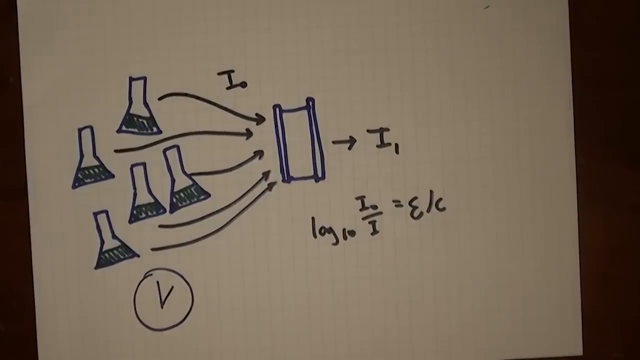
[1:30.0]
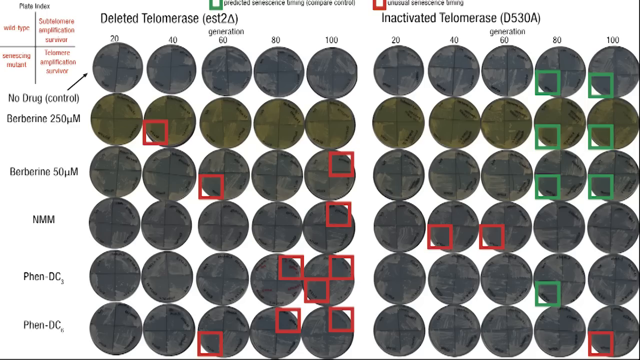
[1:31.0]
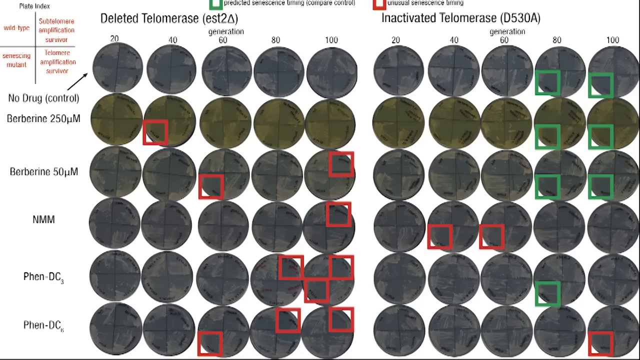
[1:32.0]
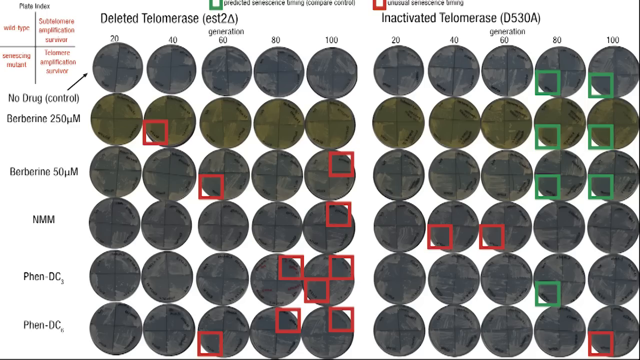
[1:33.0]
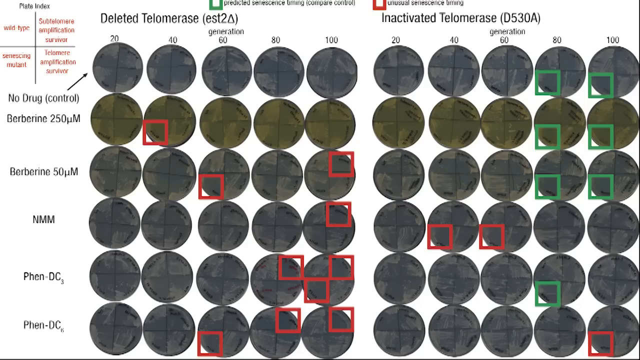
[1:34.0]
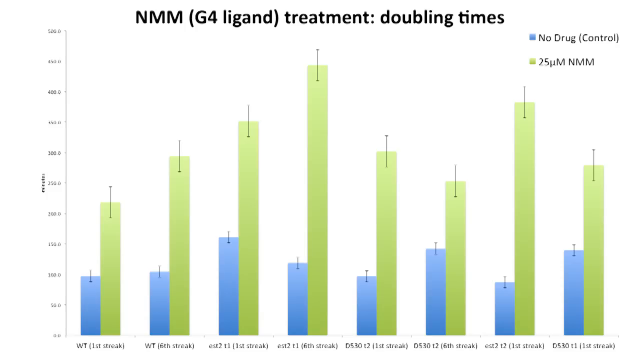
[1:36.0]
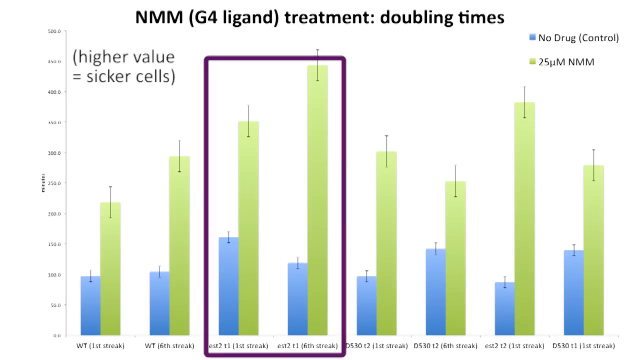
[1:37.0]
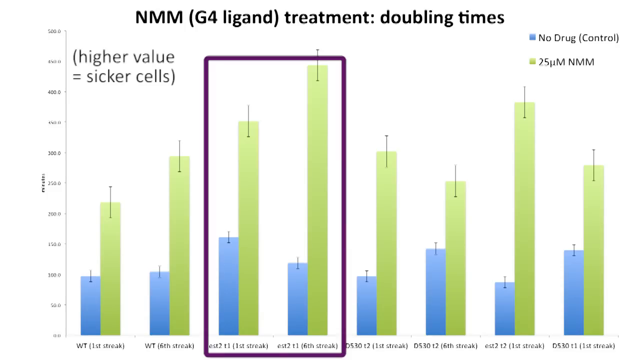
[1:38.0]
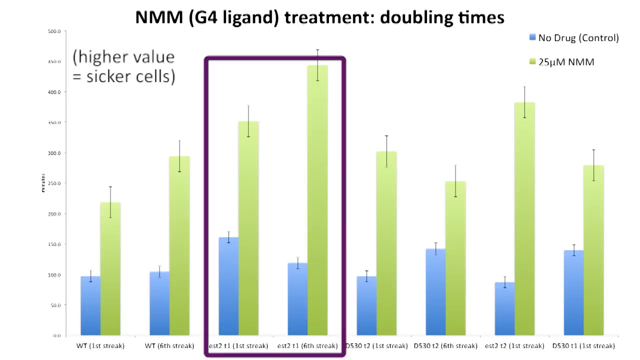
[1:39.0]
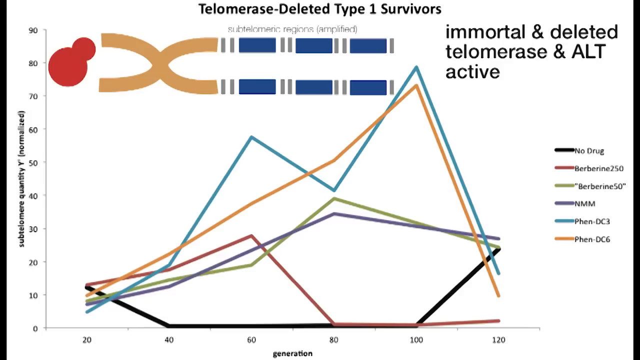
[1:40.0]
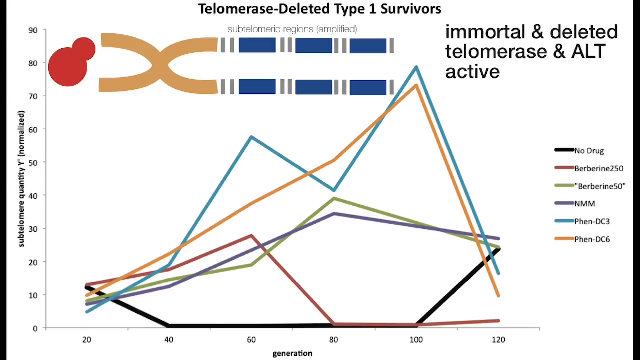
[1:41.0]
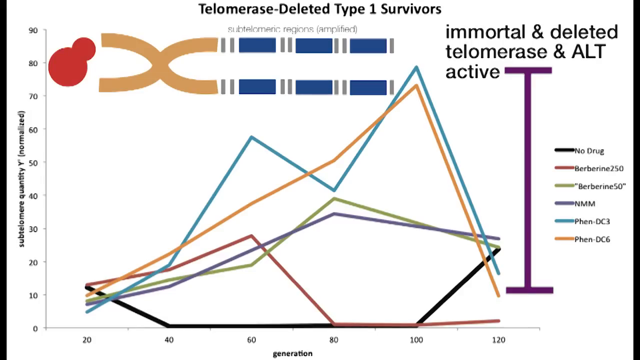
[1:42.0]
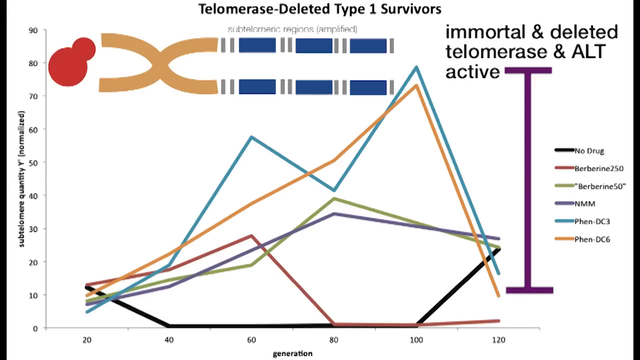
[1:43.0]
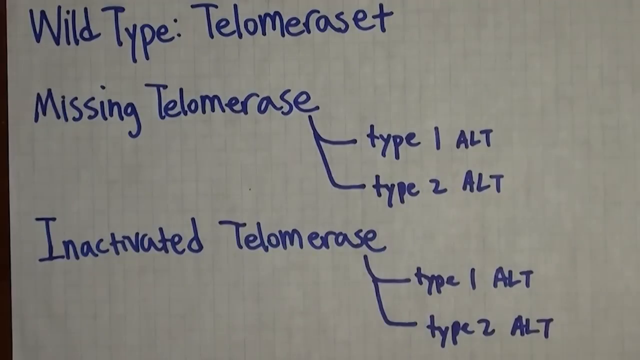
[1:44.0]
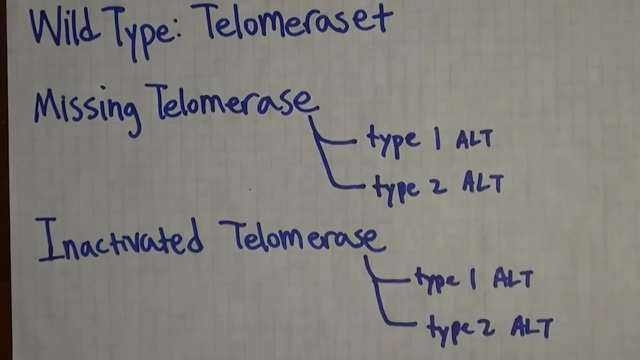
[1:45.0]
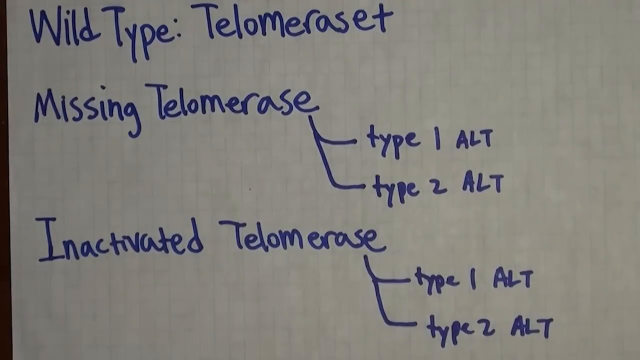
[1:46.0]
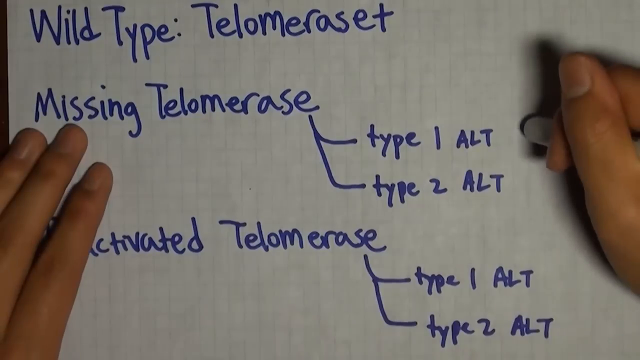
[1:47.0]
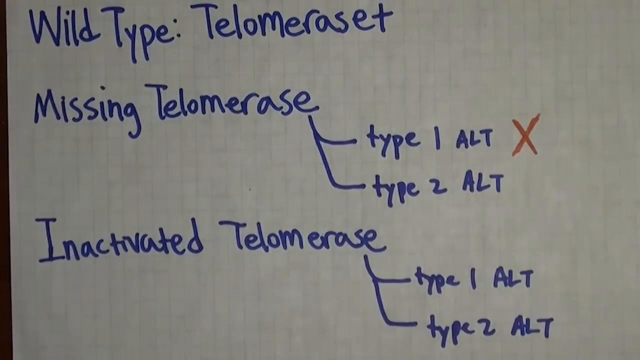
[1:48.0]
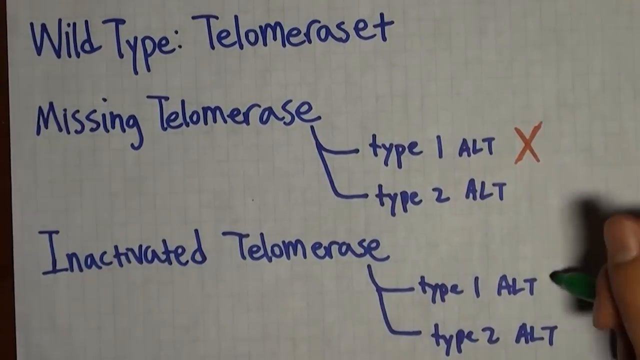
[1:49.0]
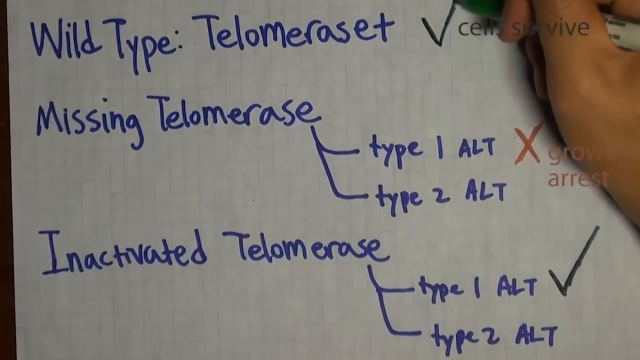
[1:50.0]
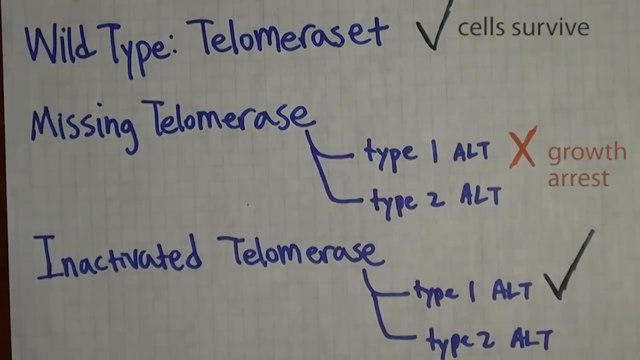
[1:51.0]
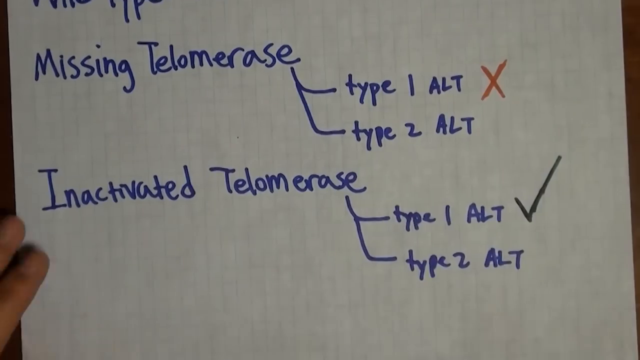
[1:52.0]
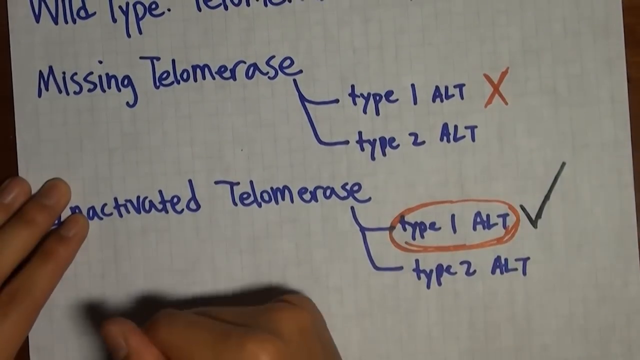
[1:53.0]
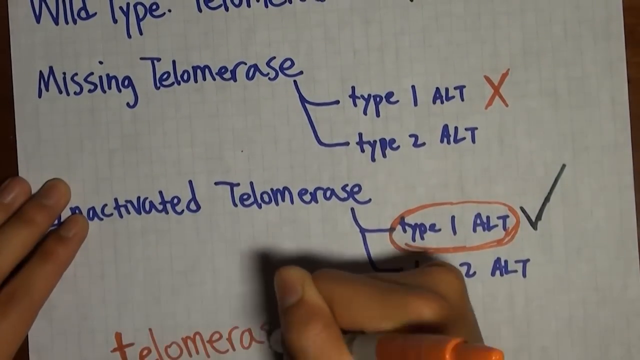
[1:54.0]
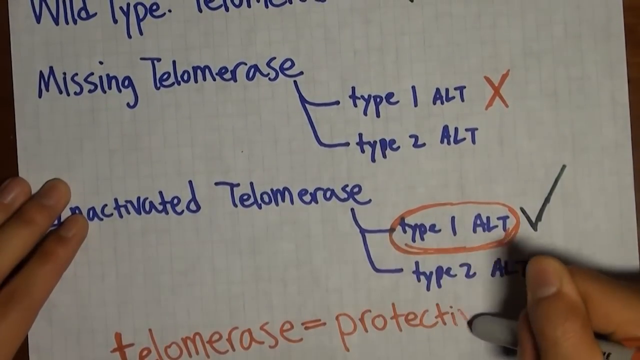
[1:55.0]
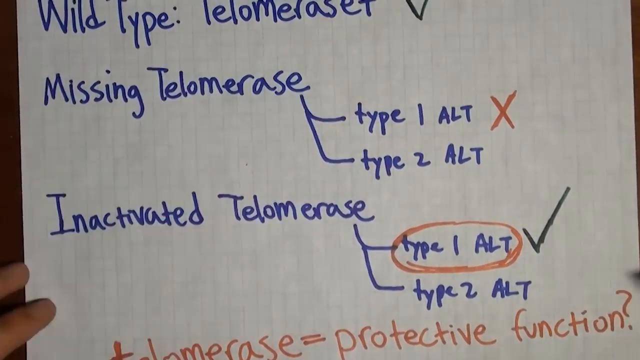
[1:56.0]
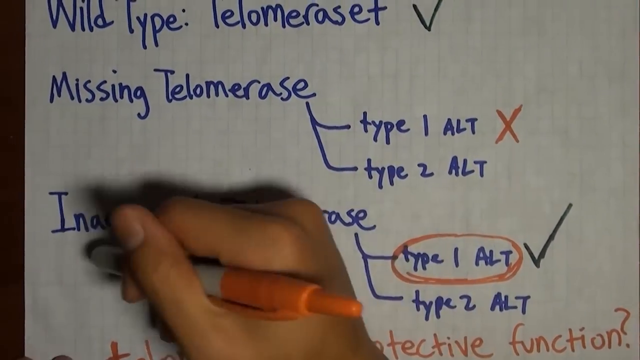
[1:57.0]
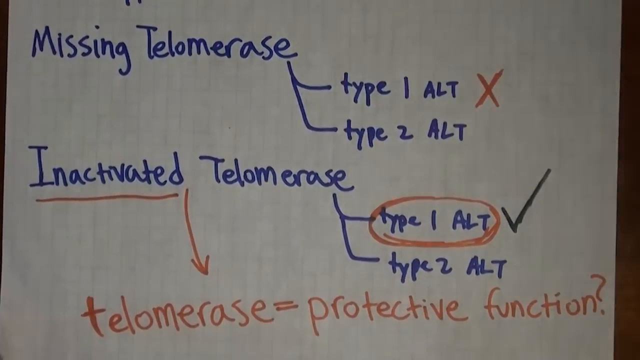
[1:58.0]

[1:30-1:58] Drawn beakers appear alongside some kind of chemical equation. Then the screen shows "deleted telomerase versus inactivated telomerase," with molecules and other things going on. There are graphs about no drug control, immortal, and deleted telomerase.